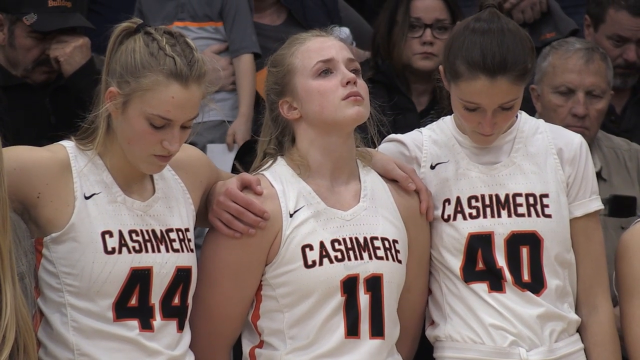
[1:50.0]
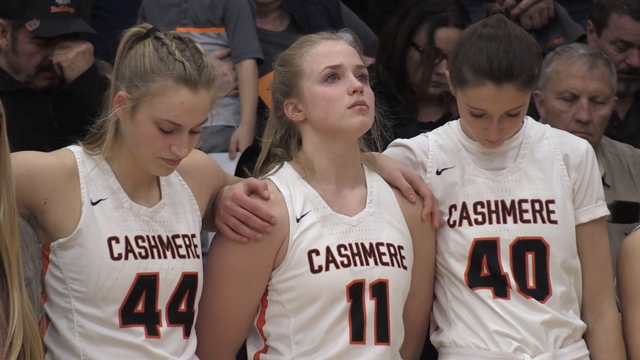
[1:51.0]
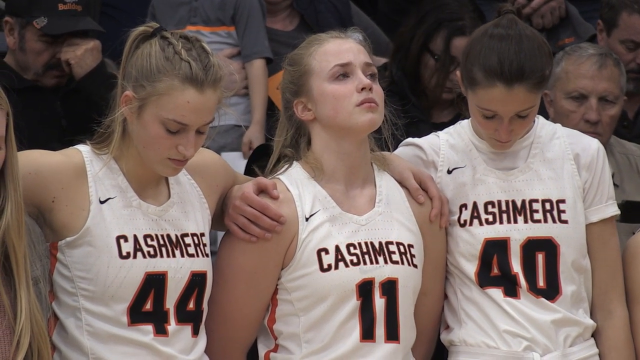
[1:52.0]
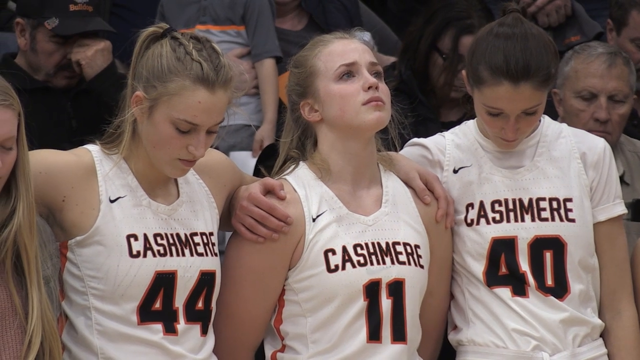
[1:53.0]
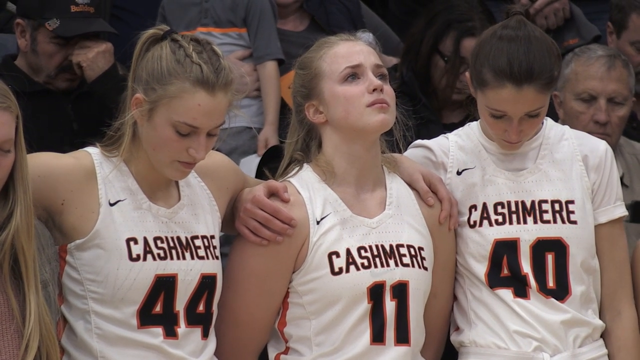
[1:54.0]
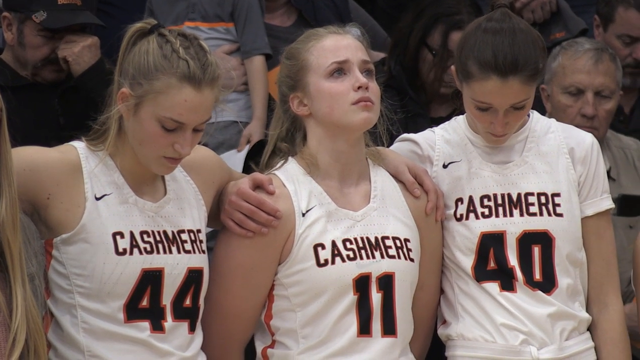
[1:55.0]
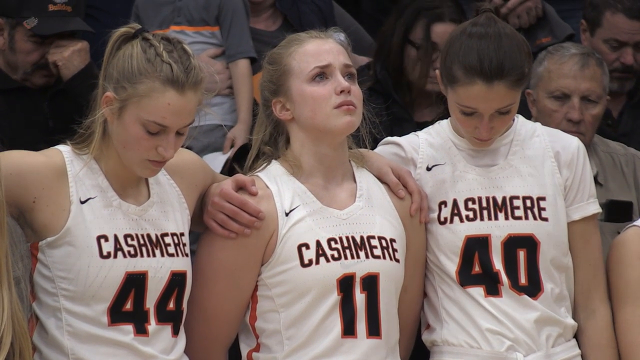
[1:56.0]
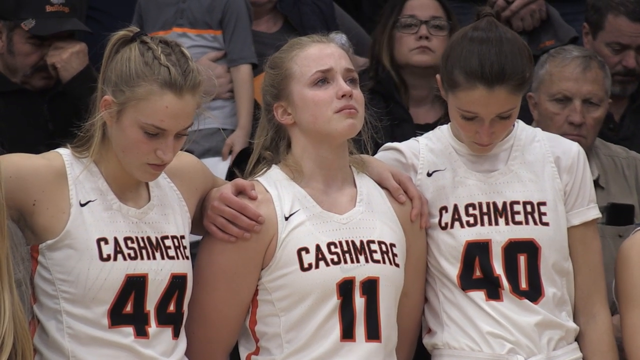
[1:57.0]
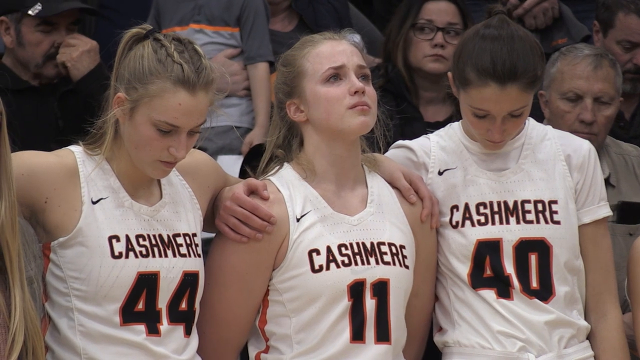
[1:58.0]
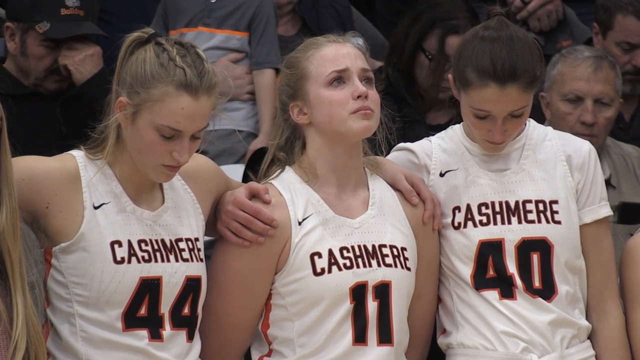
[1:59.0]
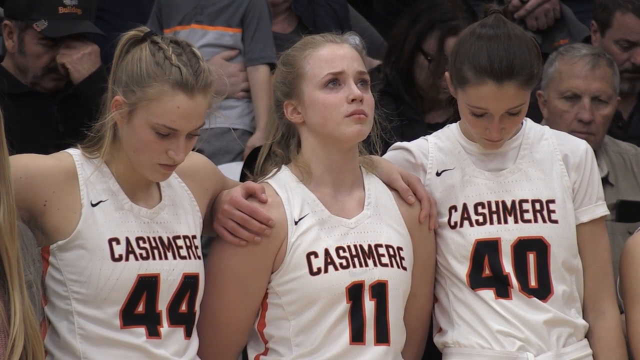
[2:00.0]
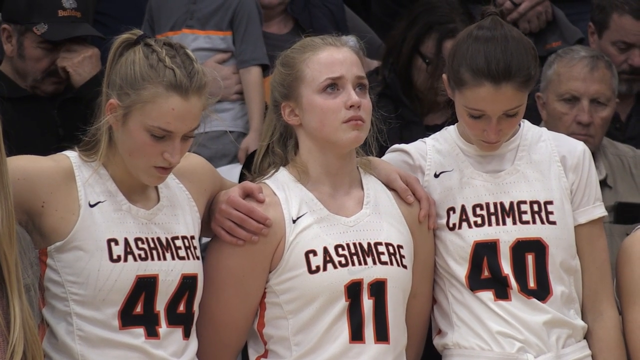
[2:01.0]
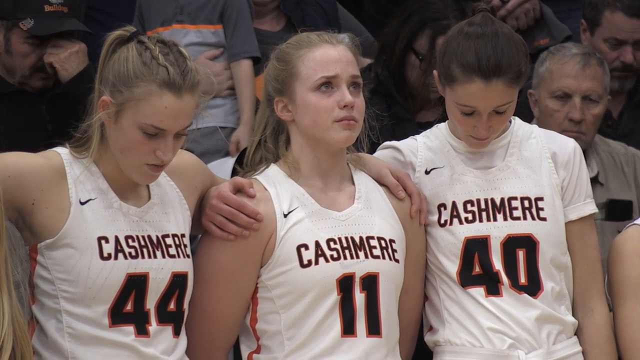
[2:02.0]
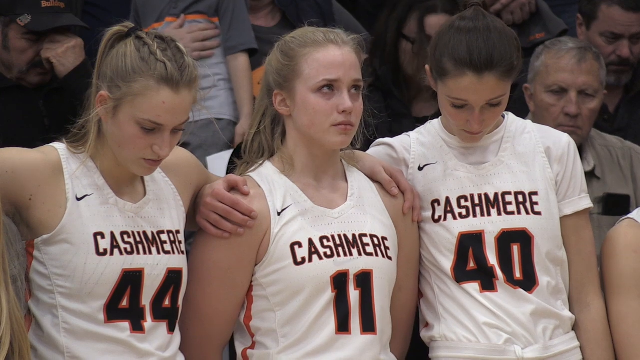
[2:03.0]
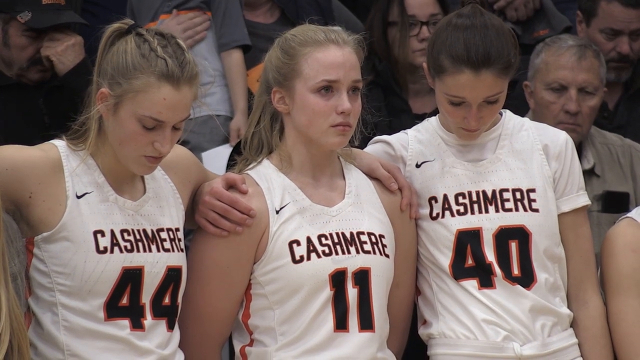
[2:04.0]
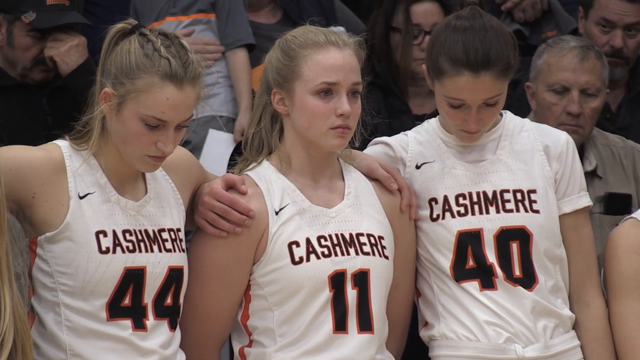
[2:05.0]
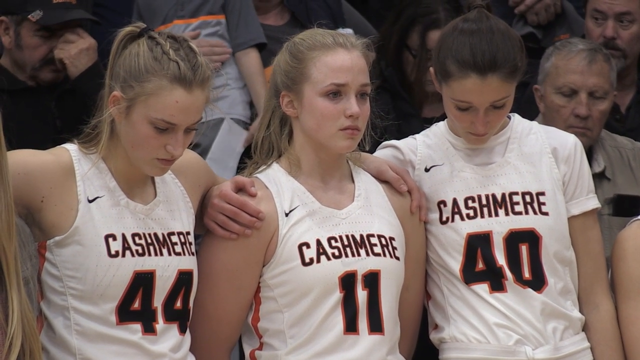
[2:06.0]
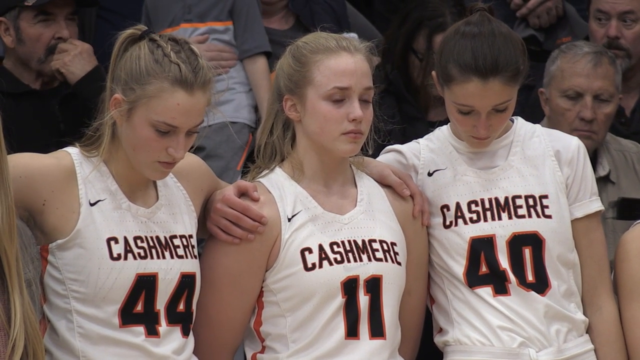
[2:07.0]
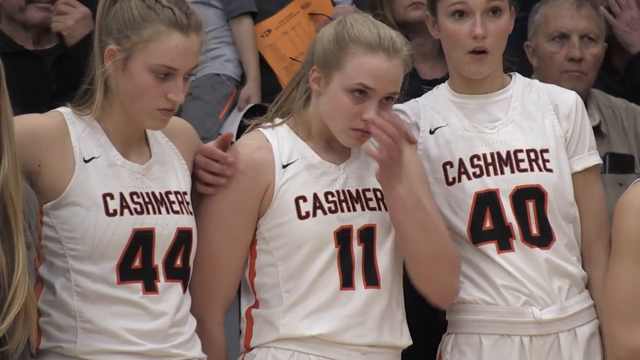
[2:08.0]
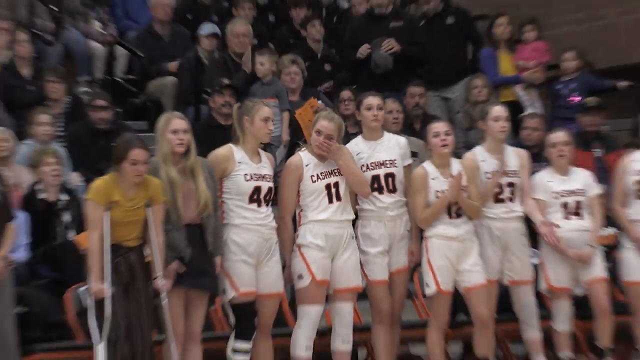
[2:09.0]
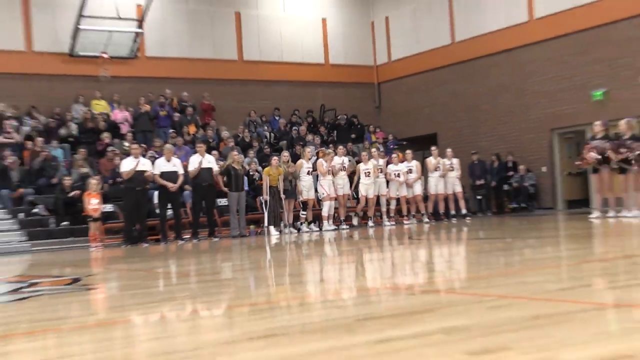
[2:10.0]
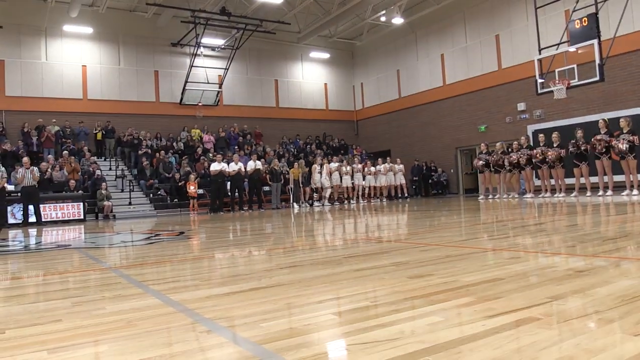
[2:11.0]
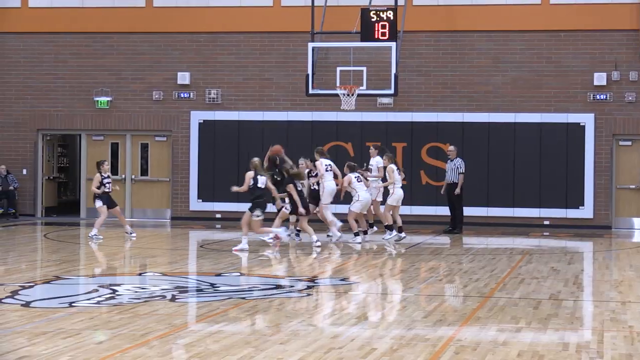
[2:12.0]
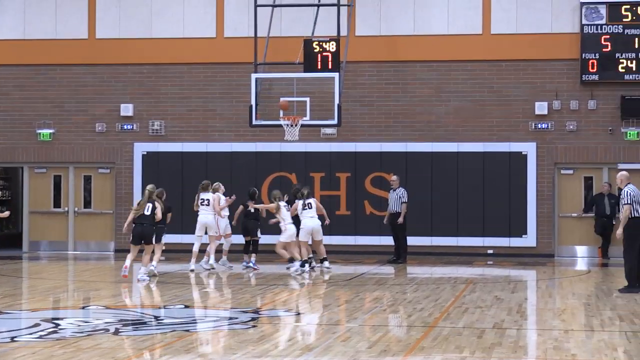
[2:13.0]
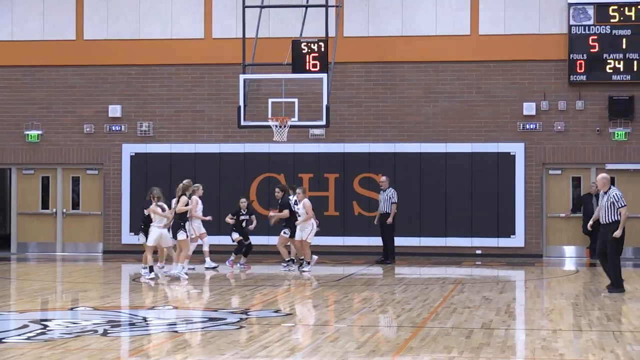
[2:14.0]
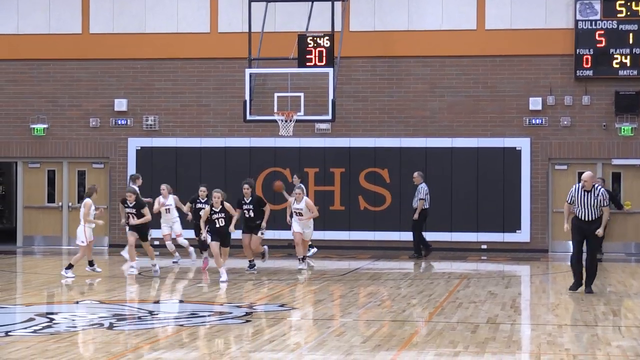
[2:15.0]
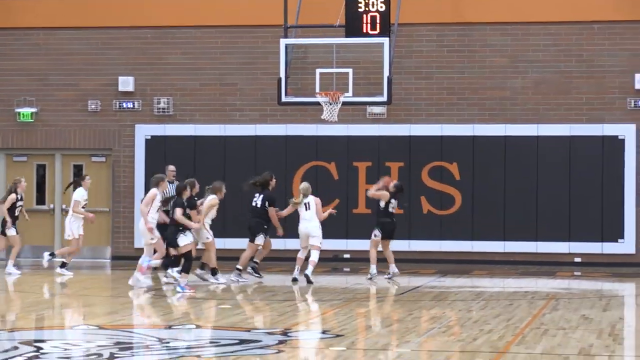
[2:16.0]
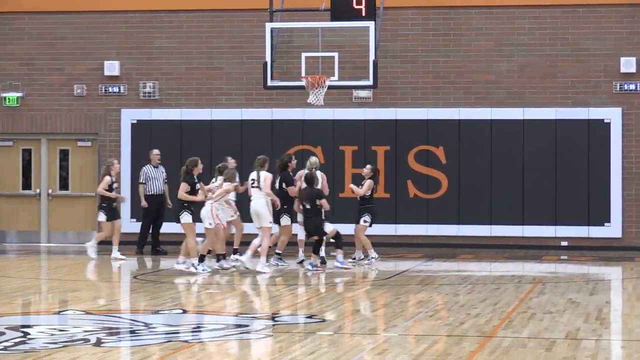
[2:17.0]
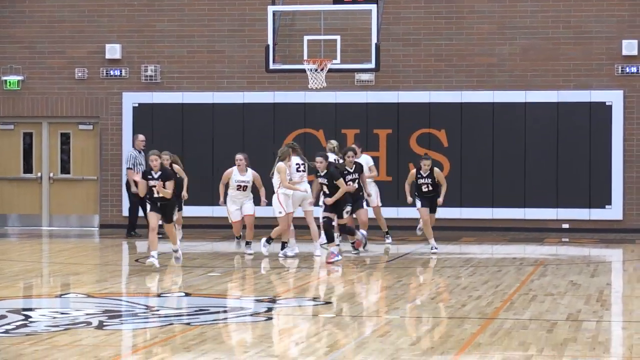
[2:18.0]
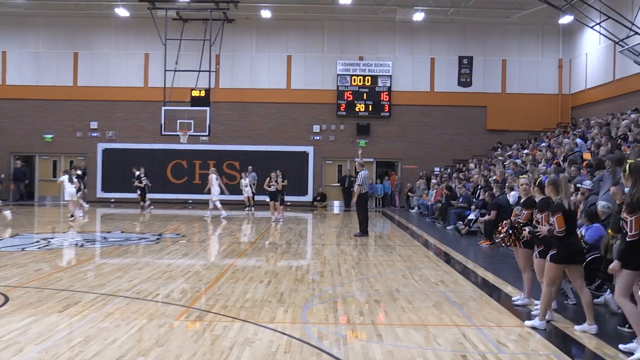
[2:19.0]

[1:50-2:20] The three female players are still shown, the camera slightly off to the left of the one in the center. She is kind of looking up, blinking, and looking off into the distance, then looks straight forward and puts her left hand up to her eyes, almost as if to wipe away tears. The camera zooms out to show the whole line of the team, apparently nine or ten players in white jerseys and white shorts standing on the one sideline, while cheerleaders on the baseline shake their pom-poms. Live game footage follows. From the back baseline, looking at the far side of the court, a shot goes up and goes in. At another point, a player on the black team, apparently number 21, gets a rebound and puts it back in the basket. The camera then zooms out to show the scoreboard in the upper right-hand corner.